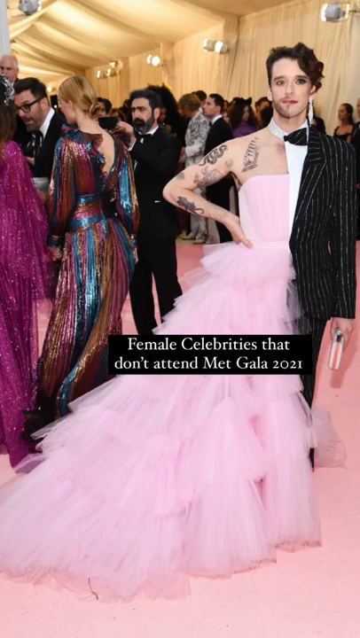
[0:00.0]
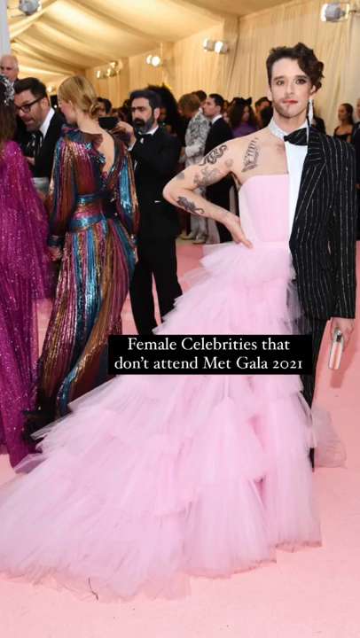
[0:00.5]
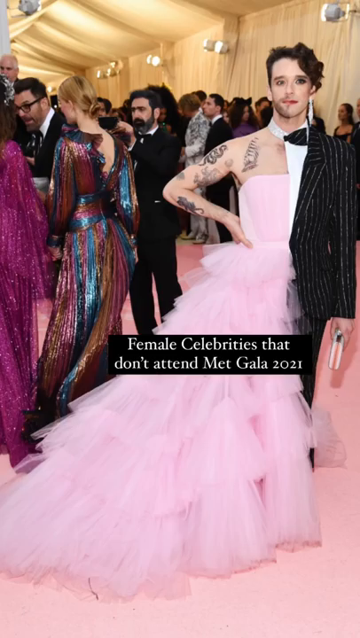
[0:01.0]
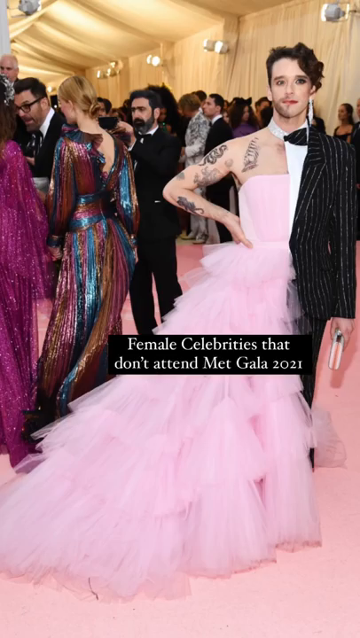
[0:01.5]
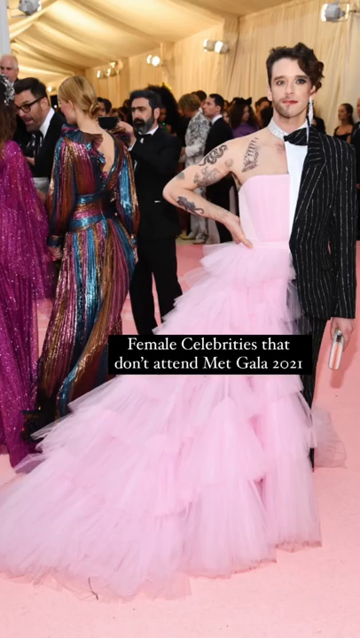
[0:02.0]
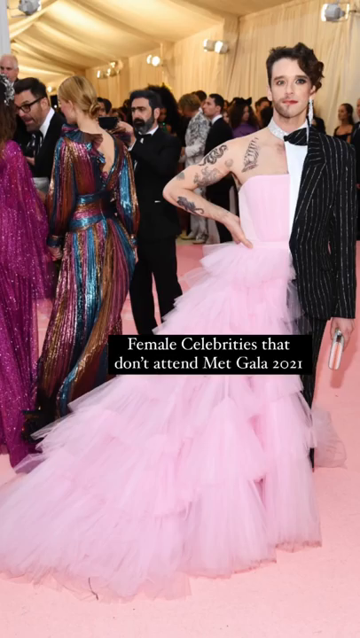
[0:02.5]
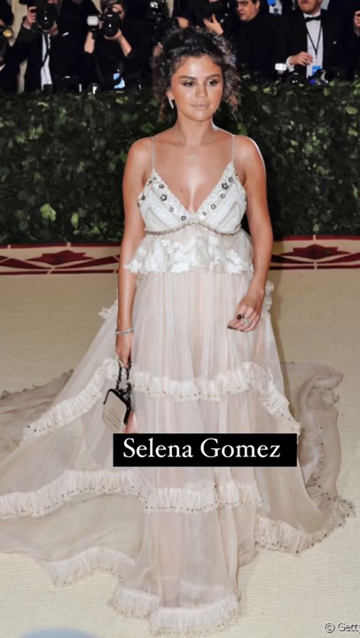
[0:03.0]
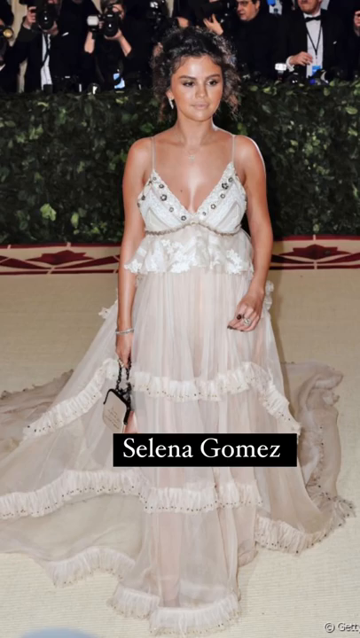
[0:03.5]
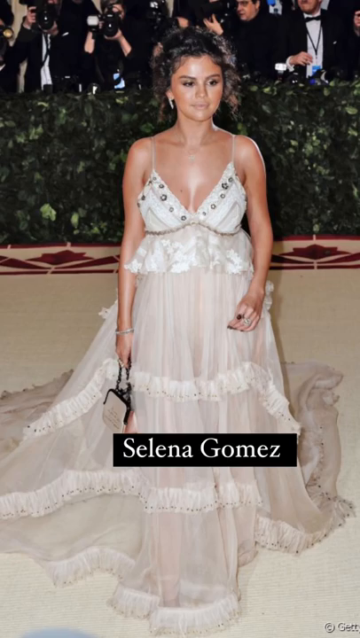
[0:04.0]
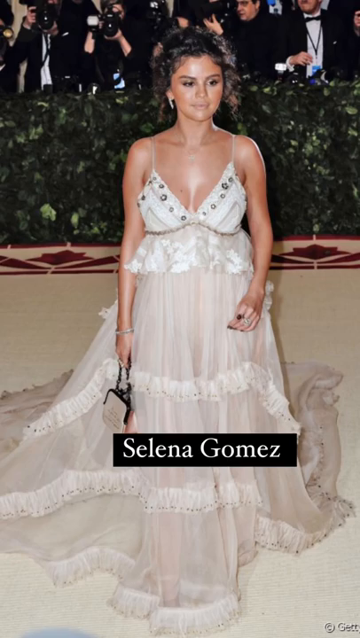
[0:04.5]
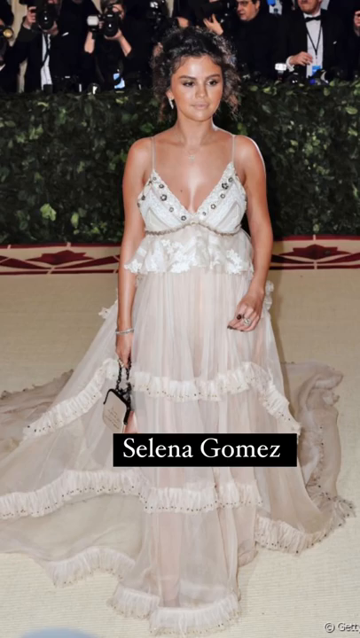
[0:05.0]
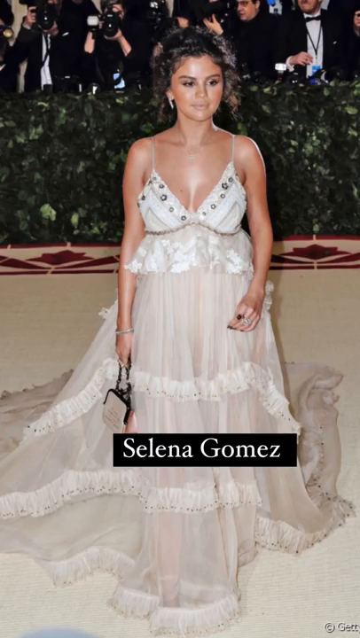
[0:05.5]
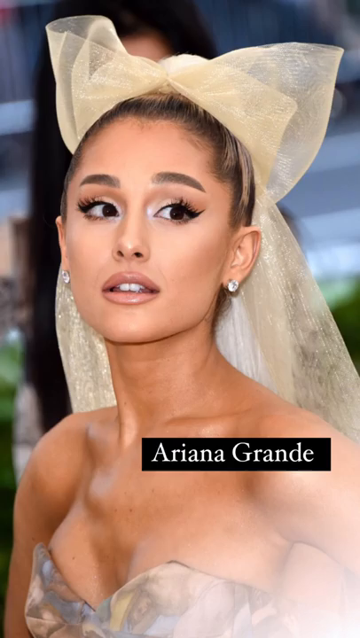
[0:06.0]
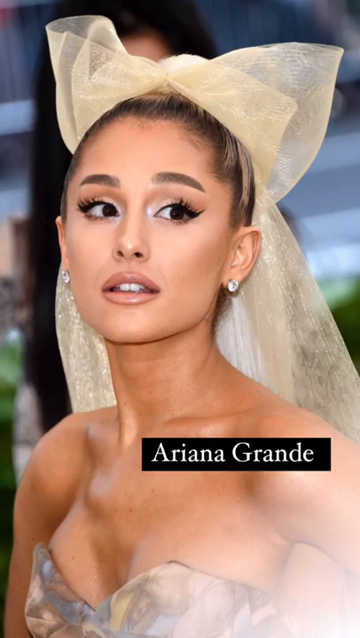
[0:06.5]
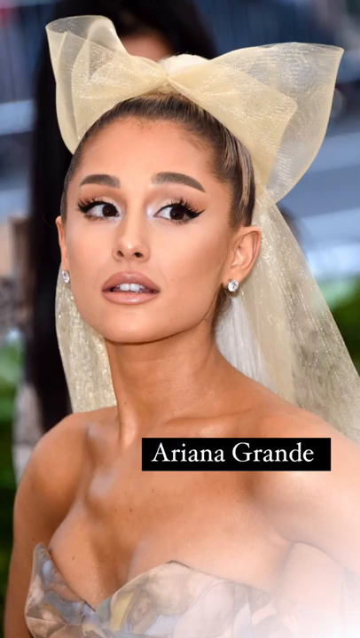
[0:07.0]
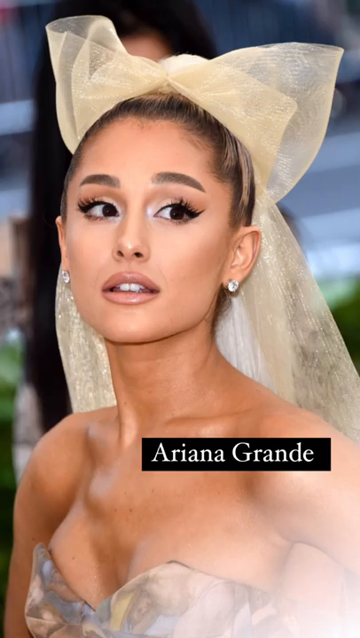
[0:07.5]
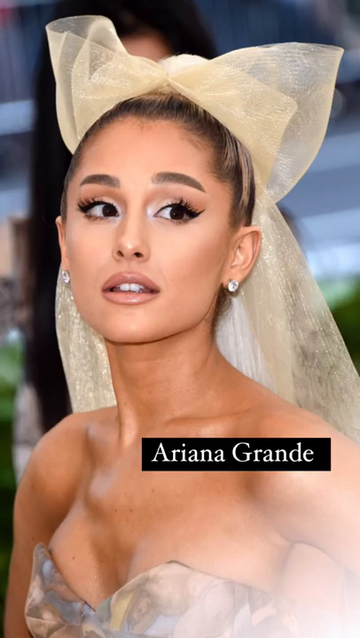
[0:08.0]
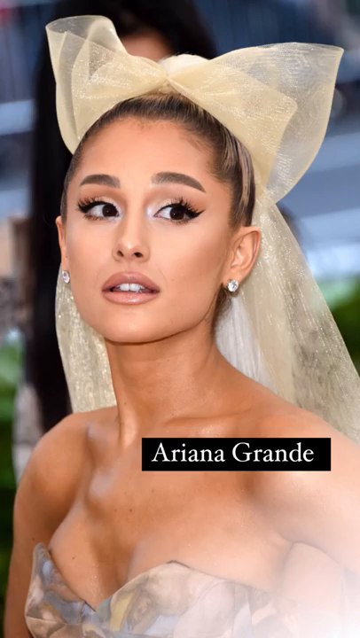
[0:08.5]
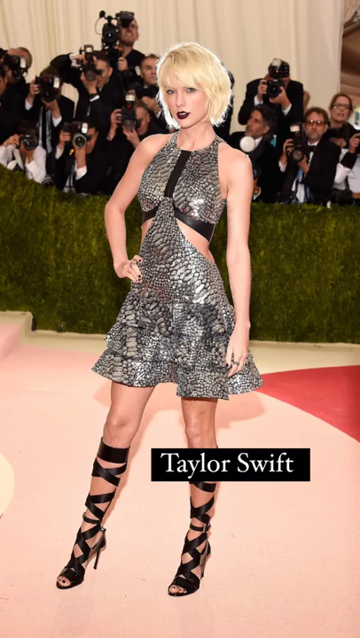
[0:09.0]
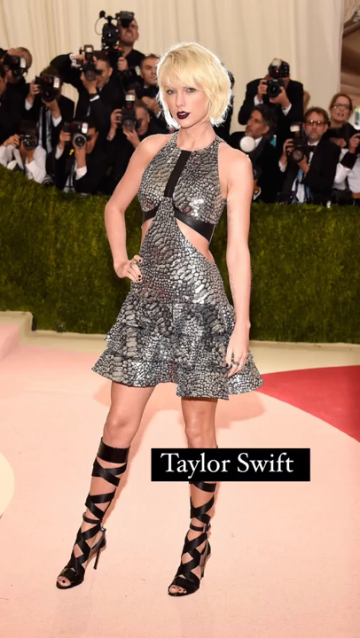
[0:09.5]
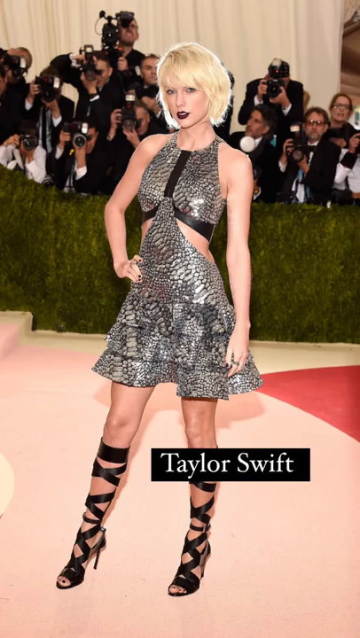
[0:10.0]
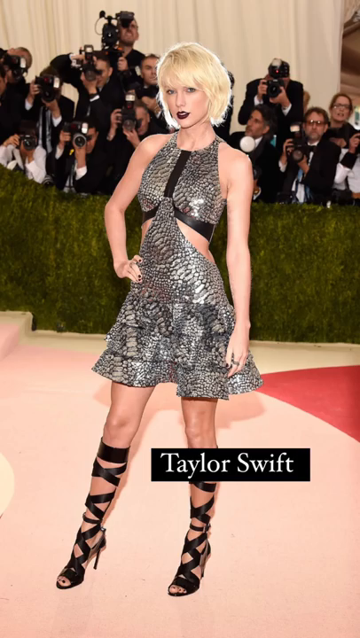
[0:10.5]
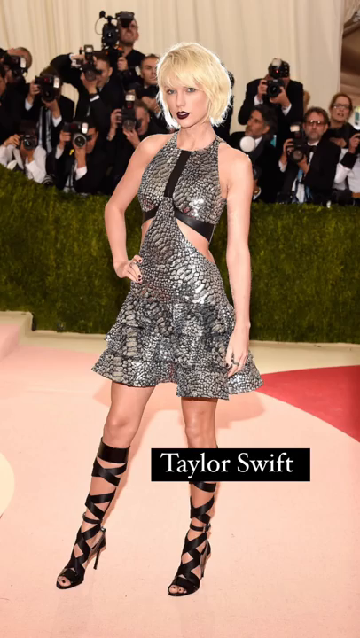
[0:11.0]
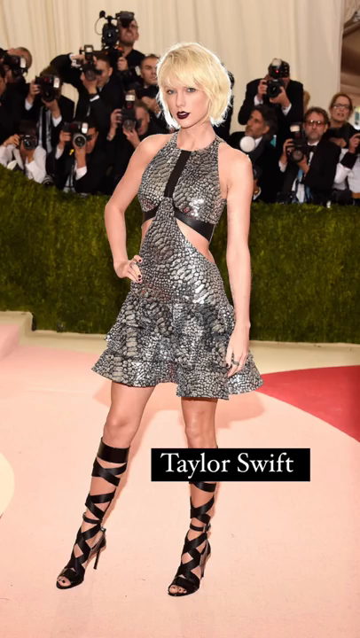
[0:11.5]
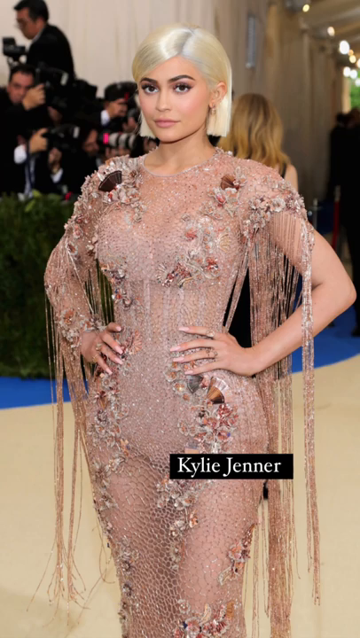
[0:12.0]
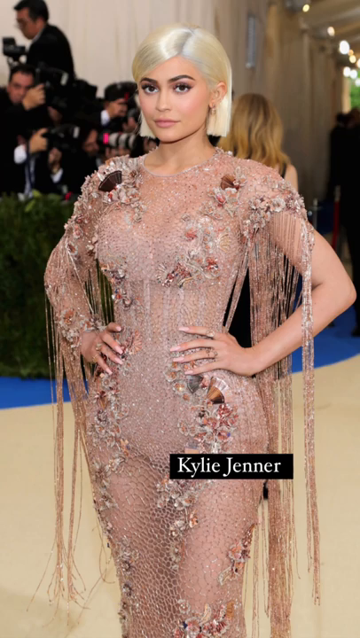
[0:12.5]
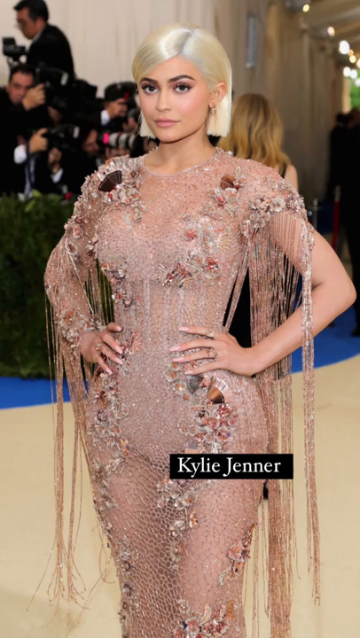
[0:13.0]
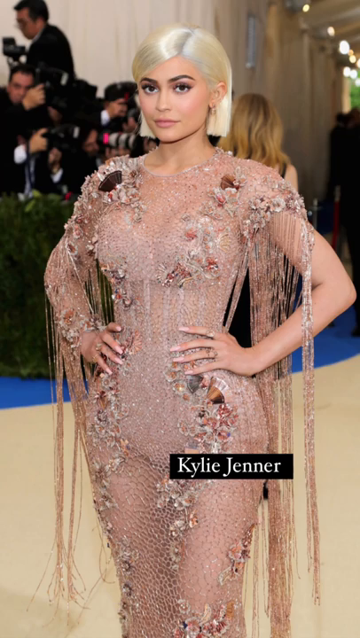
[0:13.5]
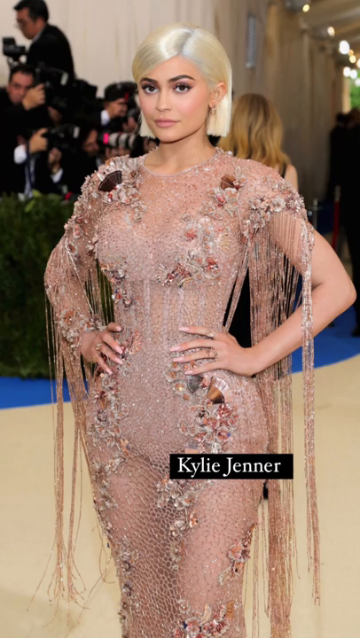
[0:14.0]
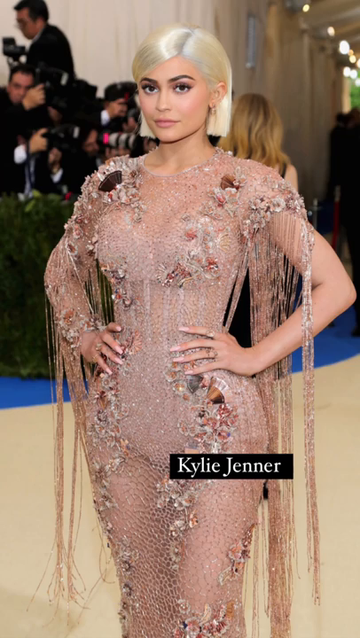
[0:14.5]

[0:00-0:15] A YouTube video displays the text "female celebrities that didn't attend" followed by an "M", possibly the start of "Met Gala", though the whole title is not visible on the opening page. The first celebrity shown is Ariana Grande, and the text then lists "Selena Gomez", "Taylor Swift" and "Kylie Jenner" as different celebrities appear. Selena Gomez wears a white dress with many ruffles. Ariana wears a gold gauzy bow and, in another look, something strapless. Kylie Jenner wears a lot of lace. Taylor Swift wears silver with black lace-up shoes. One celebrity is dressed as half man and half woman, with a pink dress down one side and a black suit down the other. In one image Kylie Jenner is very blonde. Selena Gomez holds a tiny clutch purse.